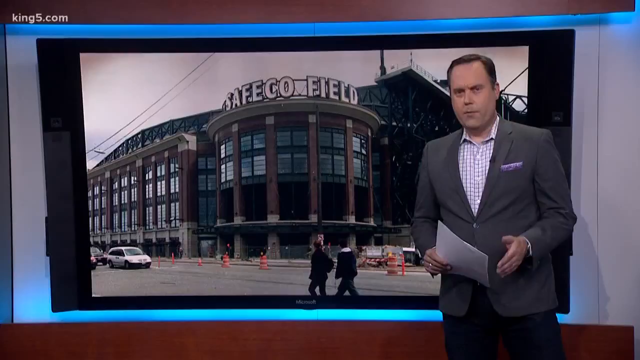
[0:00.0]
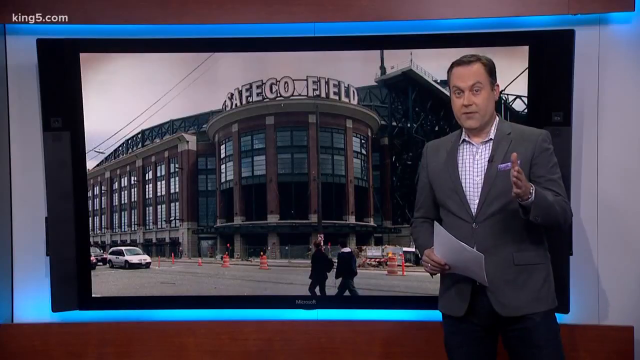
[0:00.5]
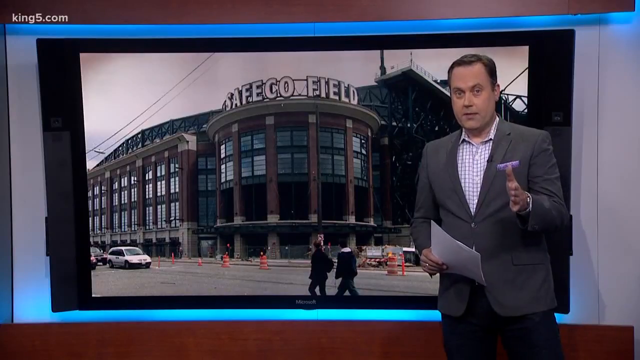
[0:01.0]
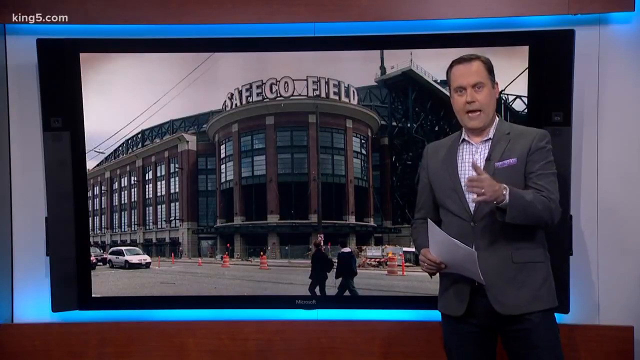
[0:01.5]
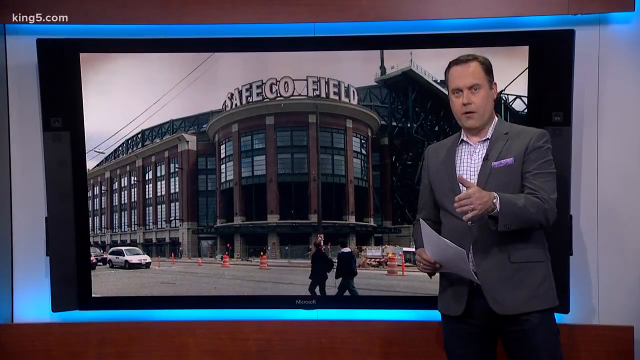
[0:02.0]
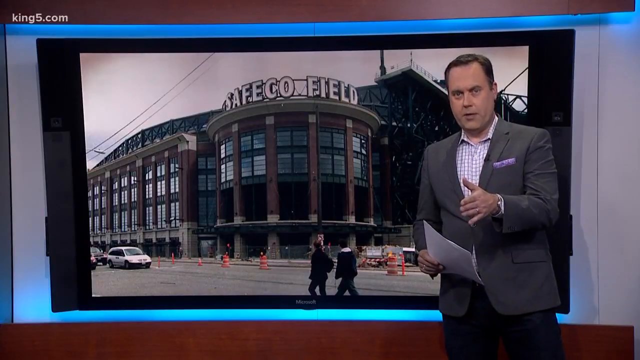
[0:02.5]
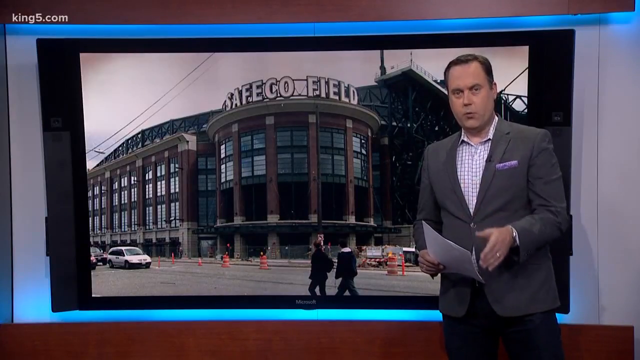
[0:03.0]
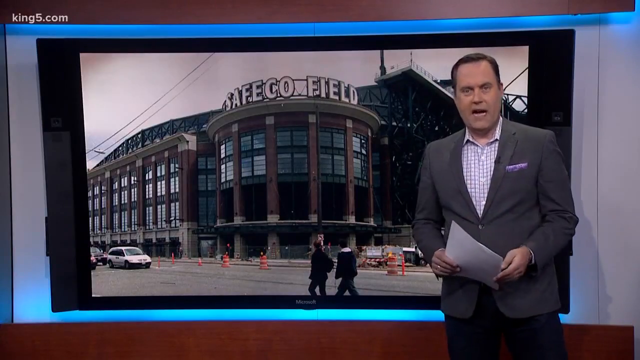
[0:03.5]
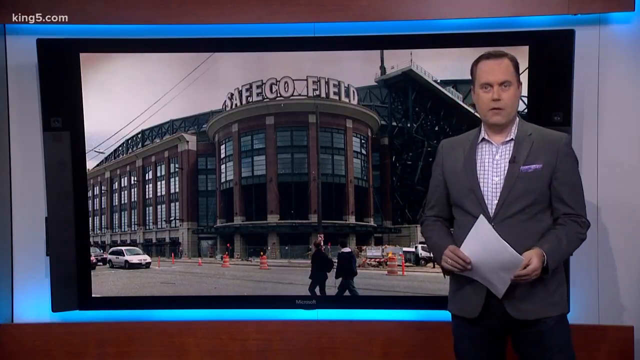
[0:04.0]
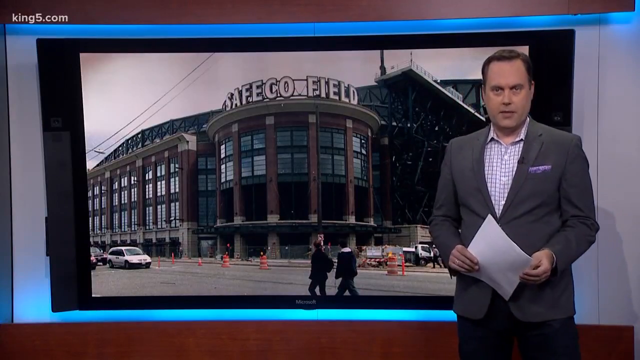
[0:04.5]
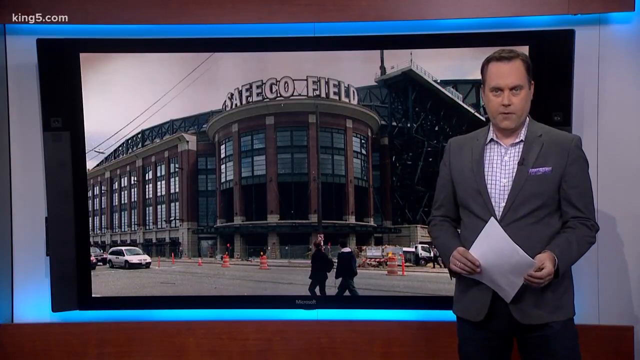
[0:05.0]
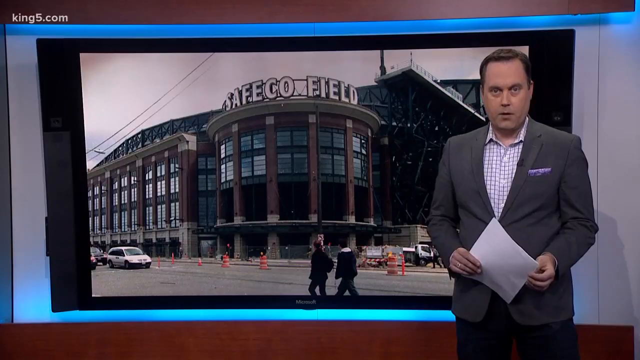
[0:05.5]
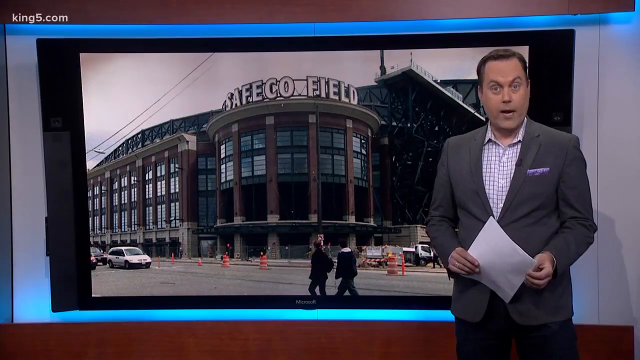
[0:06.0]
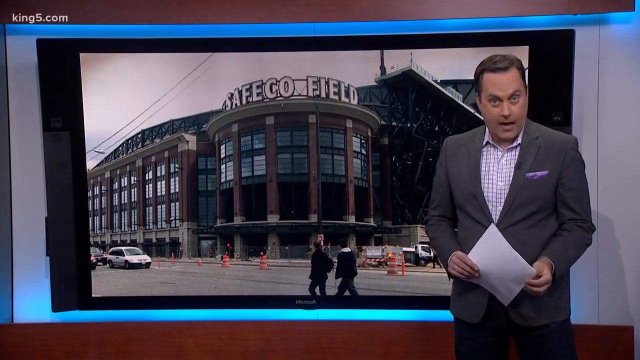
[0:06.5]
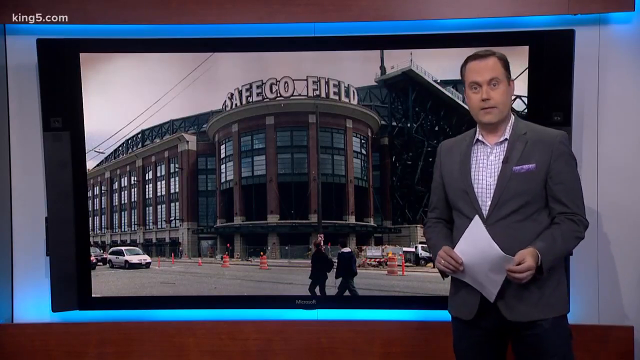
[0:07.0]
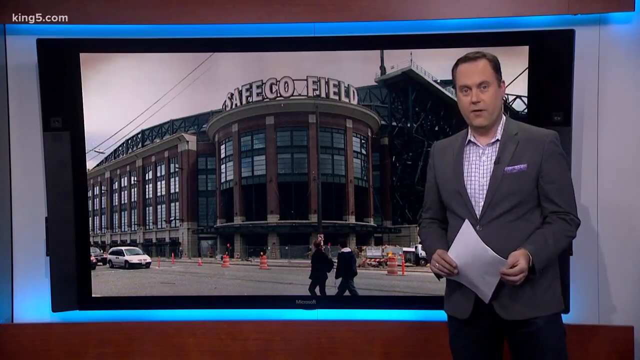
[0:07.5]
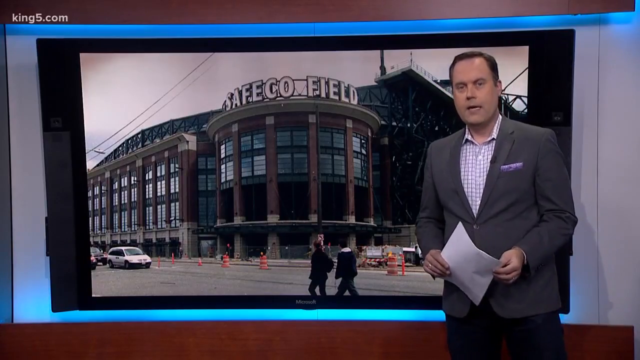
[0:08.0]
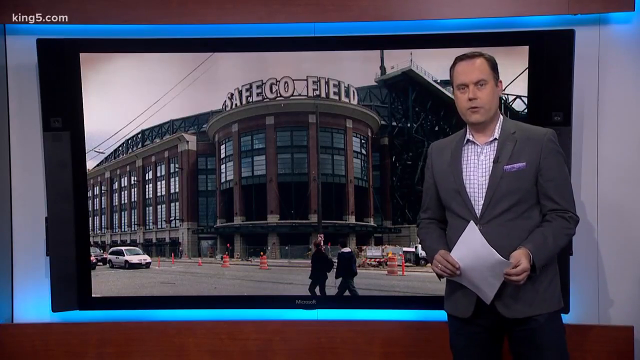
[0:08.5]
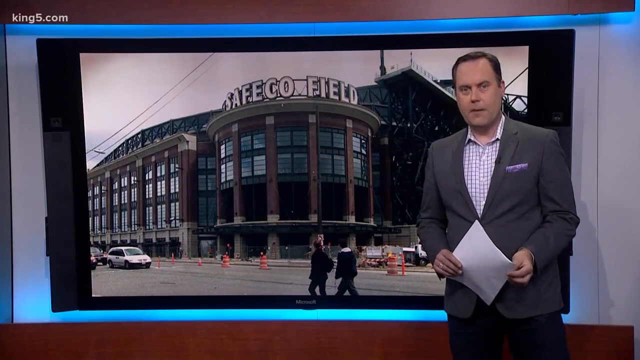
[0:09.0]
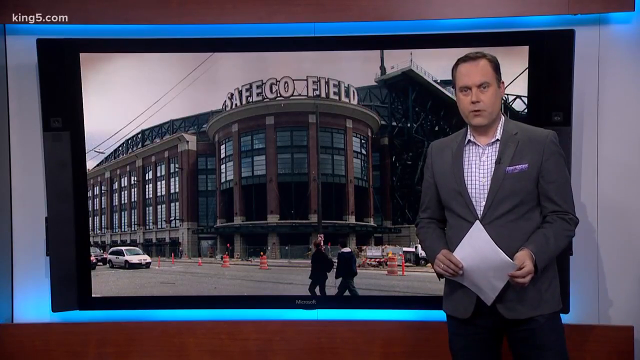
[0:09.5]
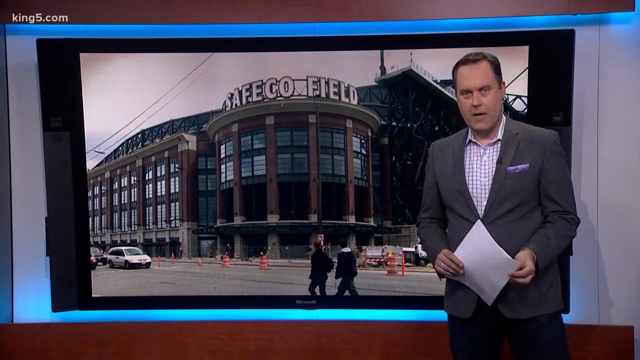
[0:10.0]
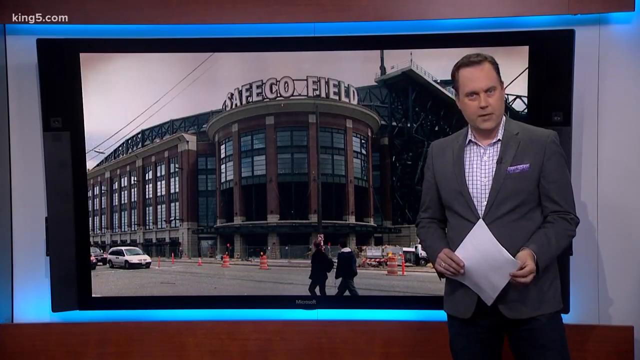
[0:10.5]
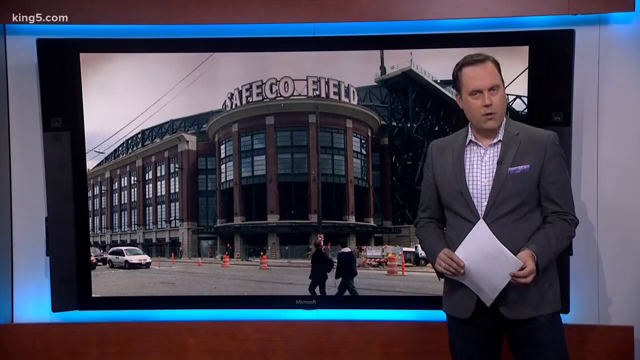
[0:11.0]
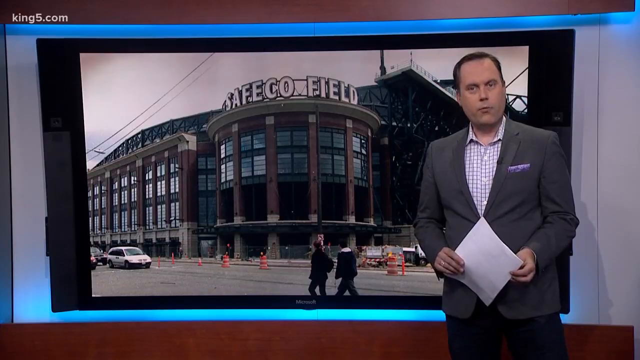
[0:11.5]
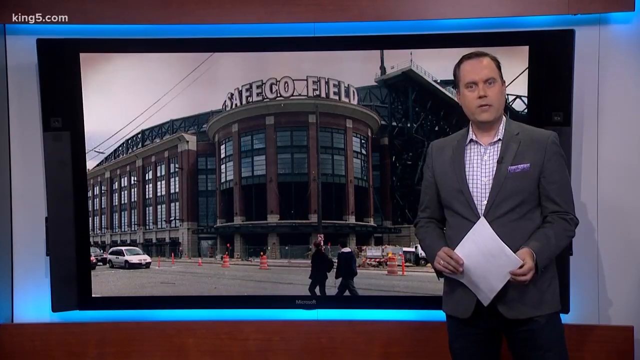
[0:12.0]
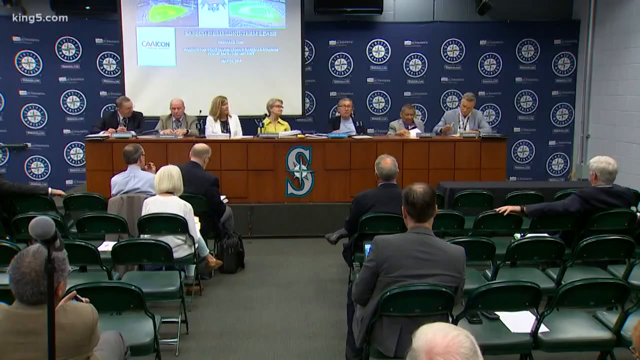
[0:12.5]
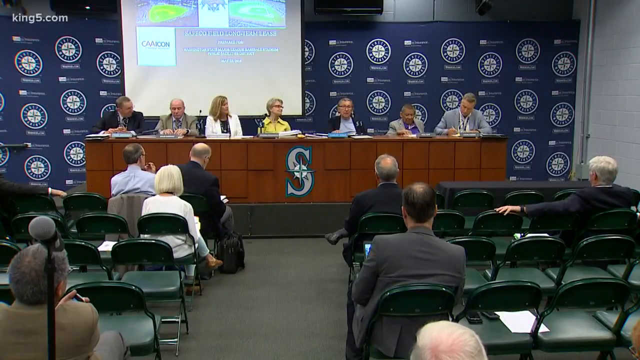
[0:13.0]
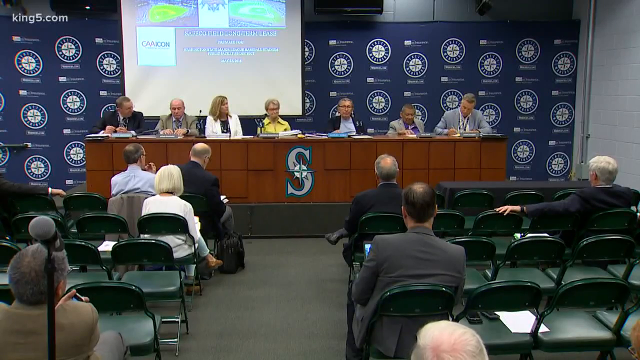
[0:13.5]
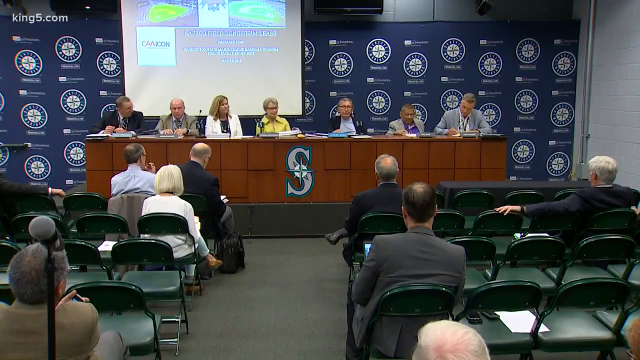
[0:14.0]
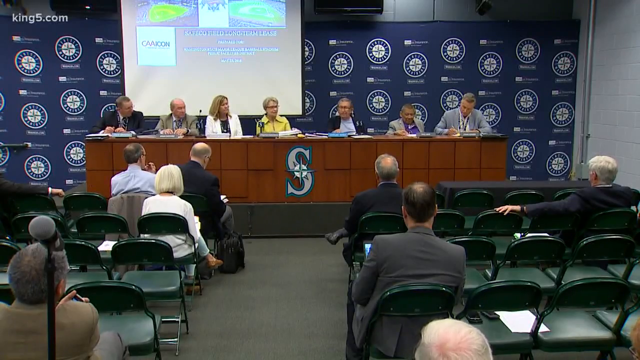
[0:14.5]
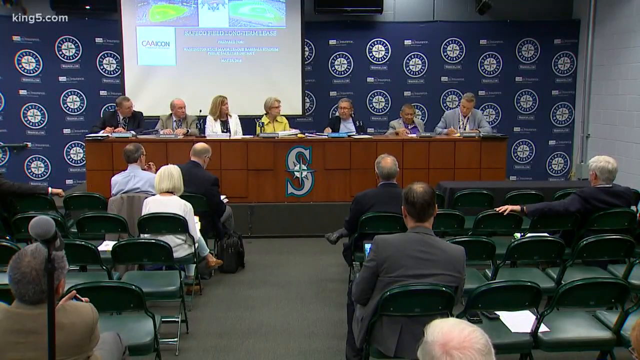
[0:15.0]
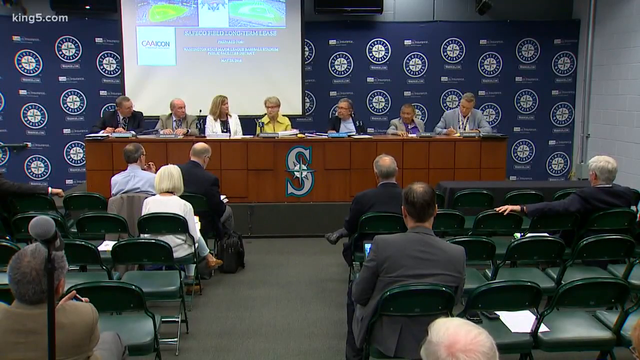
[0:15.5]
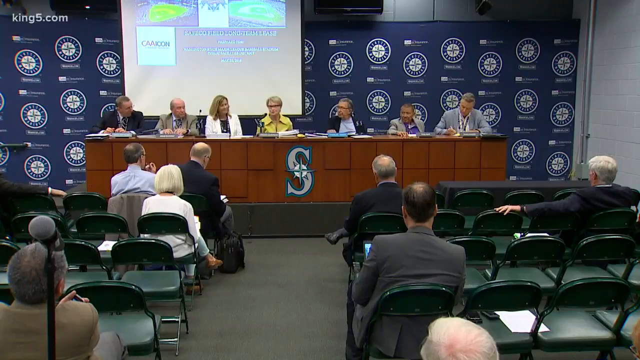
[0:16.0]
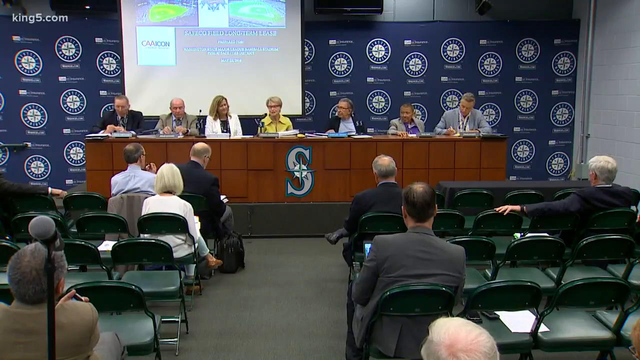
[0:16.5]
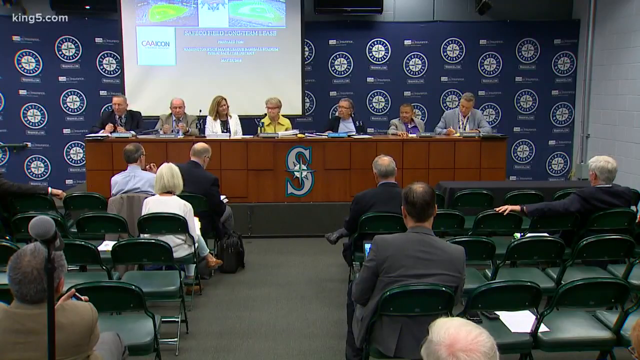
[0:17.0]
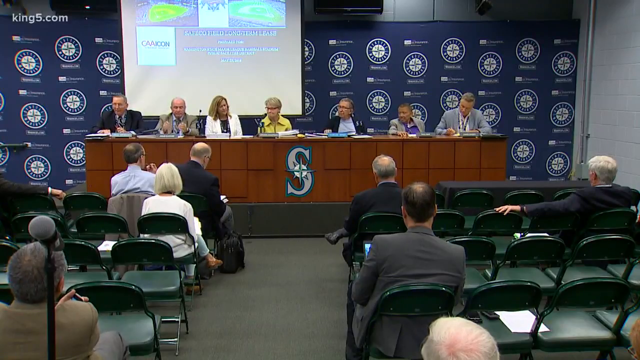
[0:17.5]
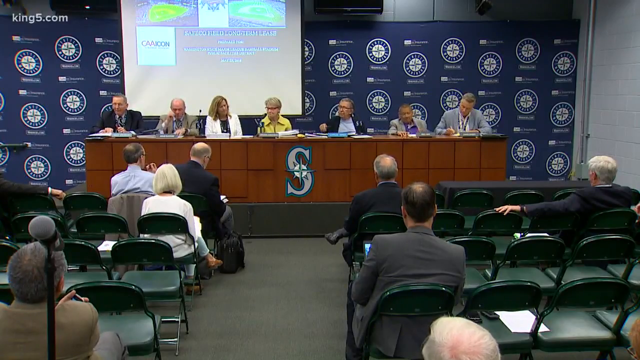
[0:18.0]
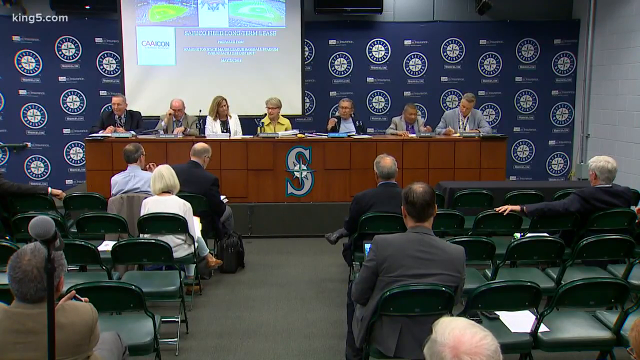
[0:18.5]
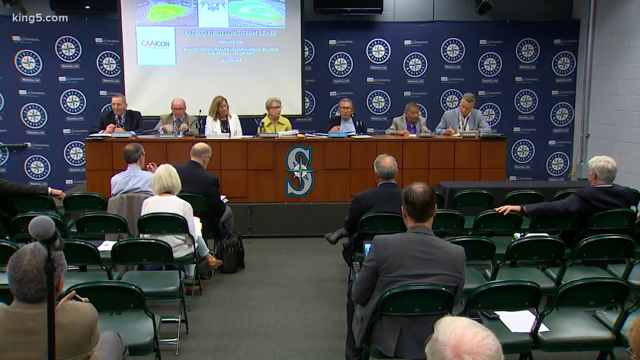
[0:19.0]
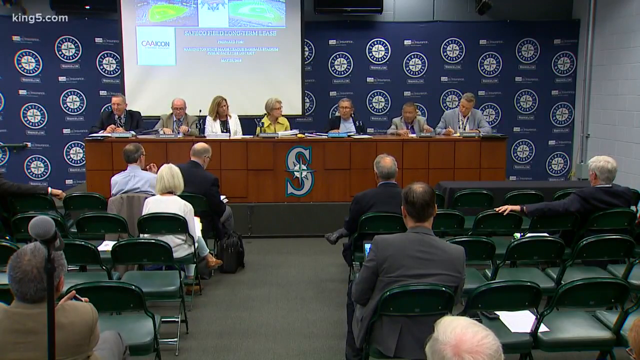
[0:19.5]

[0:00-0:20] A newscaster appears with what looks like a TV behind him showing a building that looks like a factory, with brick, and the words "Safeco Field" around it. People are walking, and there are orange safety cones in front of the building. The newscaster is probably in his 40s or 50s and wears a jacket and a collared shirt, holding some papers in his hands. In front of the building, two people walk by. The view then switches to a very long desk with about seven people sitting at it. There are a lot of folding chairs and a hallway. The people at the desk all have microphones that go to their mouths, and some type of display screen has something on it. Many of the seats are empty.